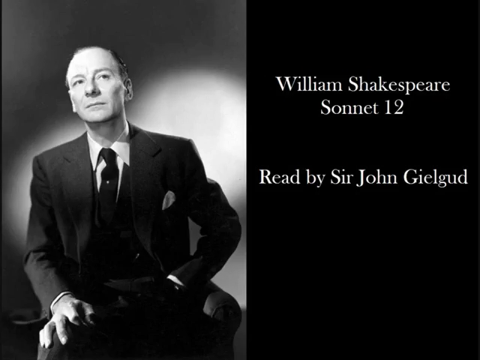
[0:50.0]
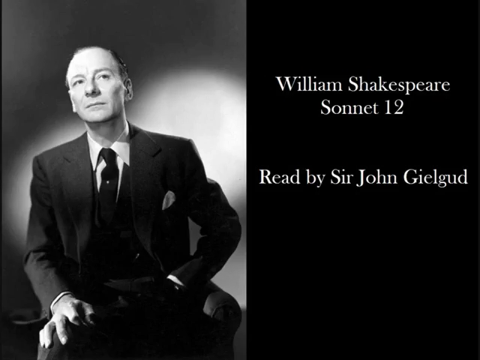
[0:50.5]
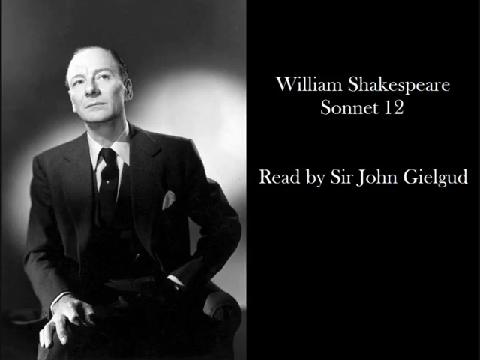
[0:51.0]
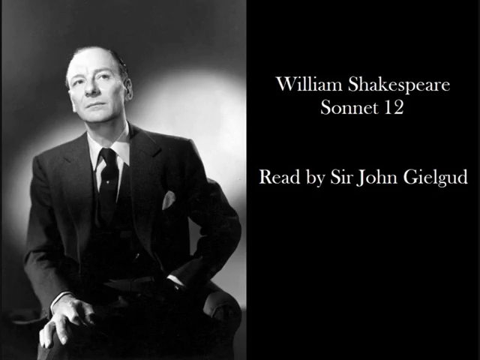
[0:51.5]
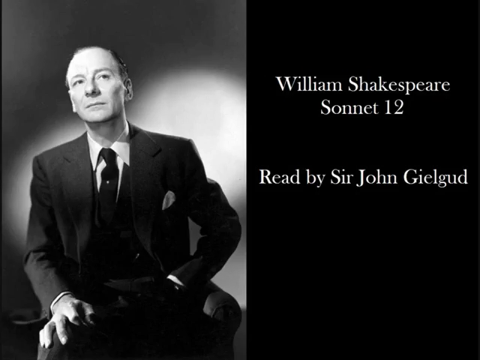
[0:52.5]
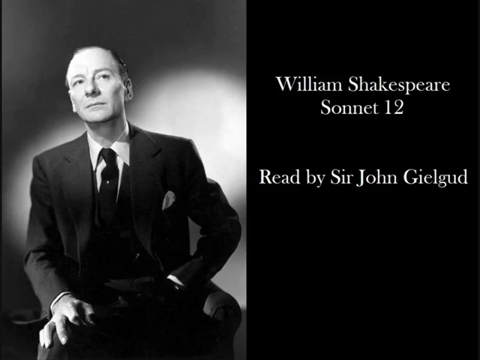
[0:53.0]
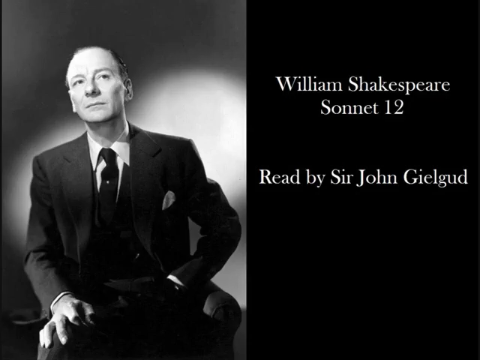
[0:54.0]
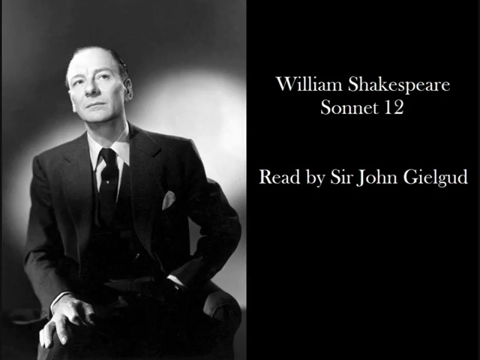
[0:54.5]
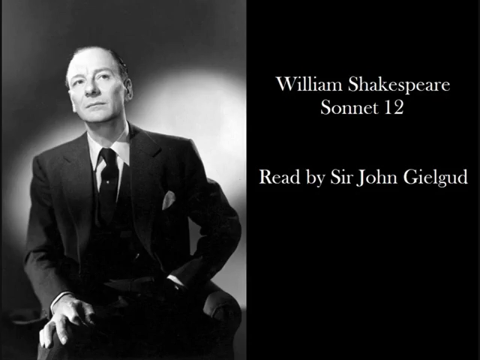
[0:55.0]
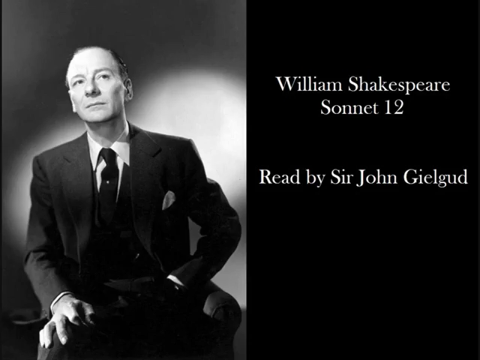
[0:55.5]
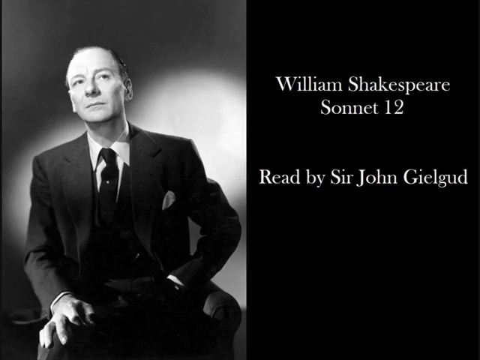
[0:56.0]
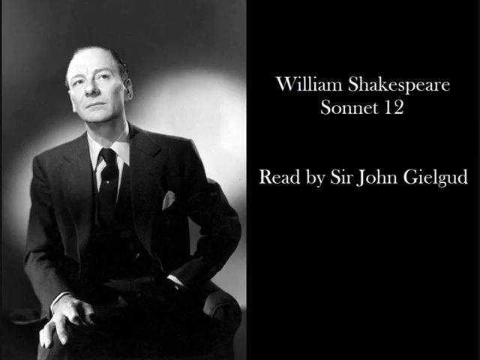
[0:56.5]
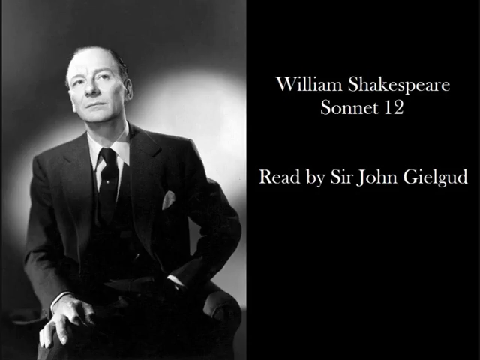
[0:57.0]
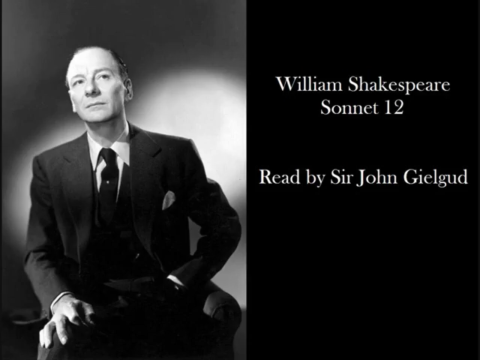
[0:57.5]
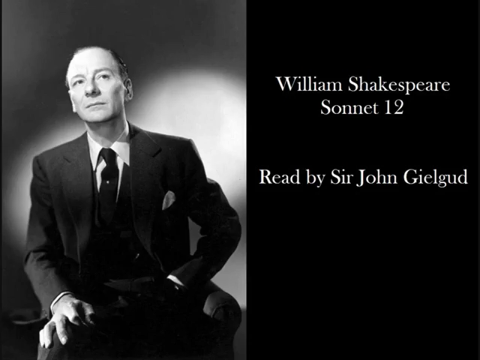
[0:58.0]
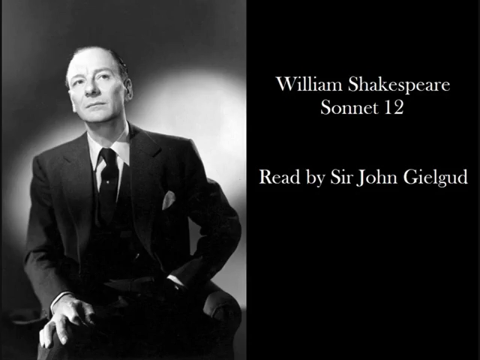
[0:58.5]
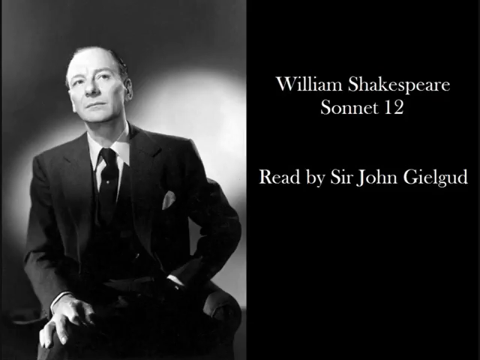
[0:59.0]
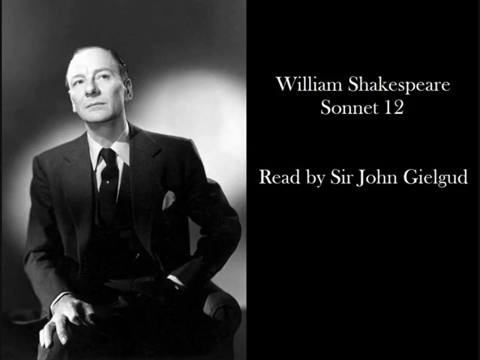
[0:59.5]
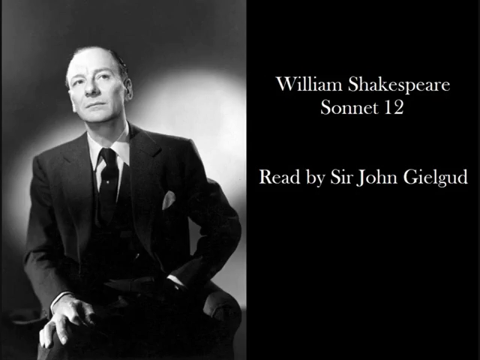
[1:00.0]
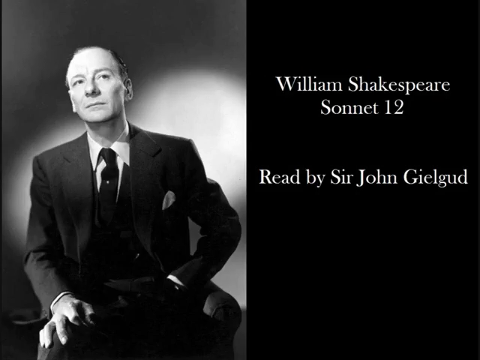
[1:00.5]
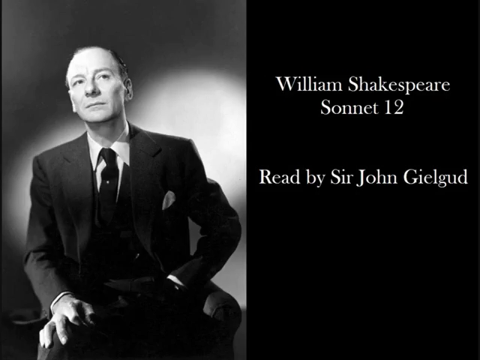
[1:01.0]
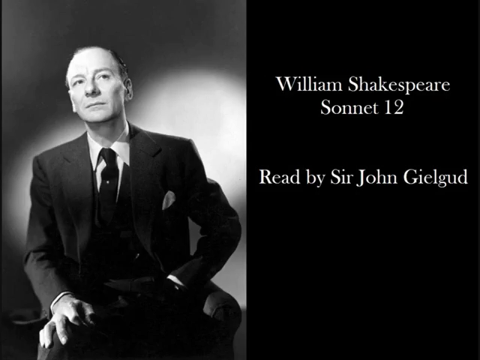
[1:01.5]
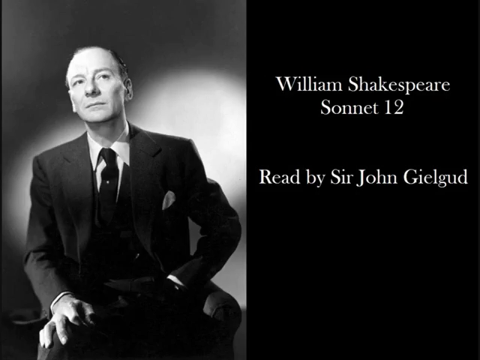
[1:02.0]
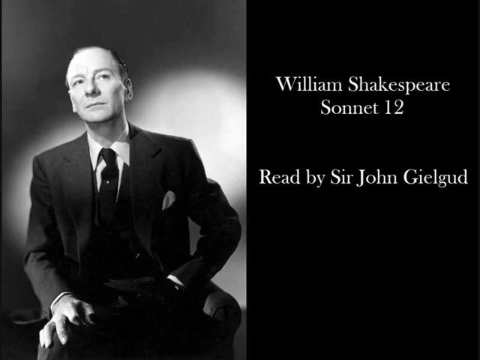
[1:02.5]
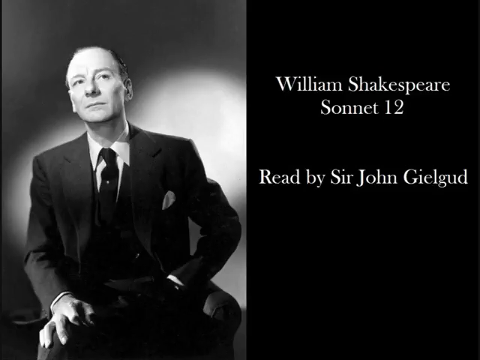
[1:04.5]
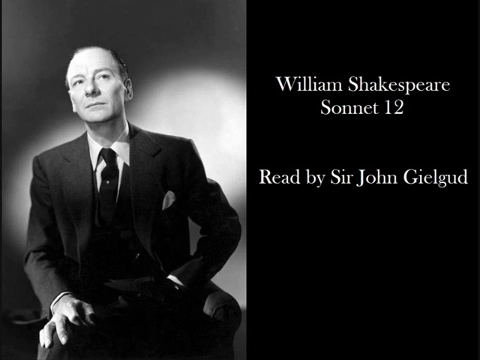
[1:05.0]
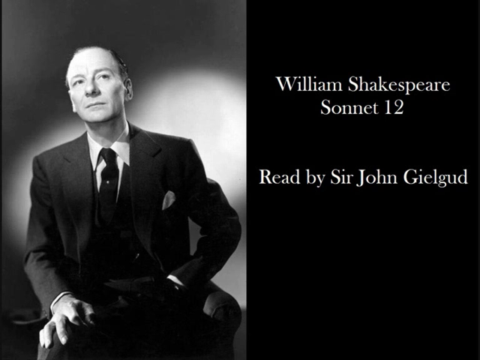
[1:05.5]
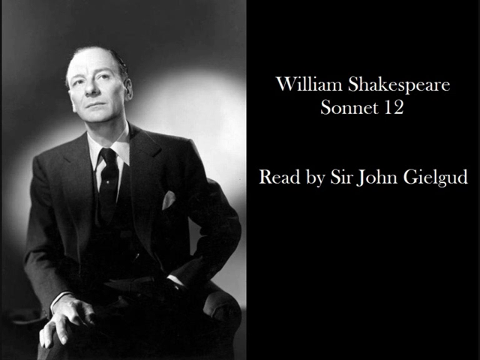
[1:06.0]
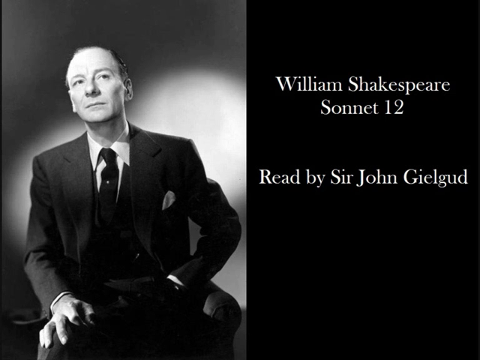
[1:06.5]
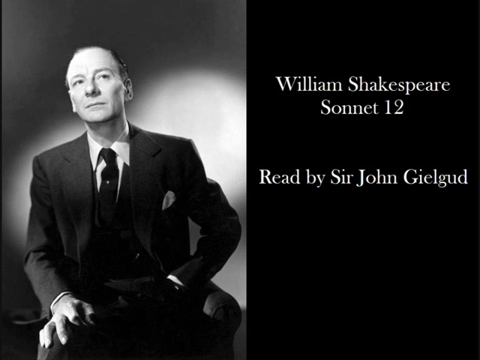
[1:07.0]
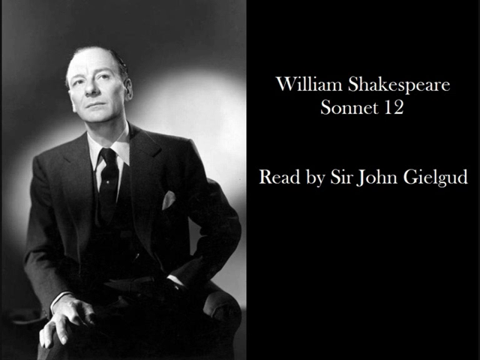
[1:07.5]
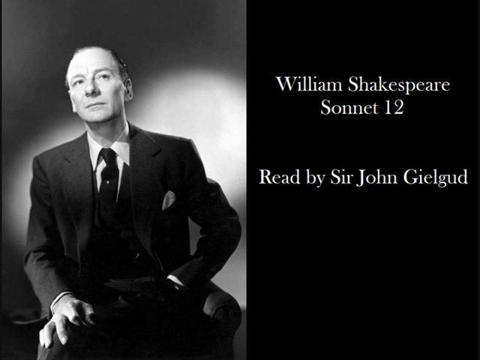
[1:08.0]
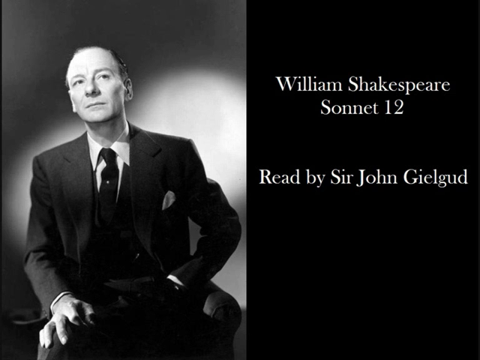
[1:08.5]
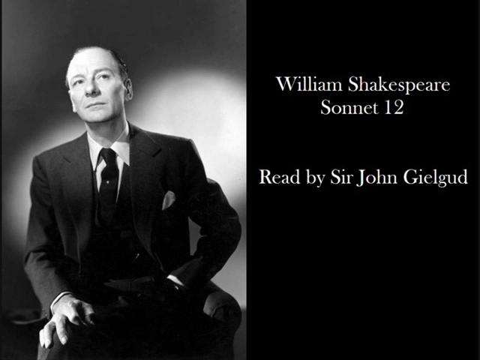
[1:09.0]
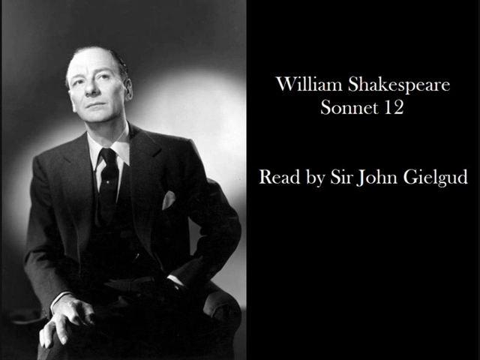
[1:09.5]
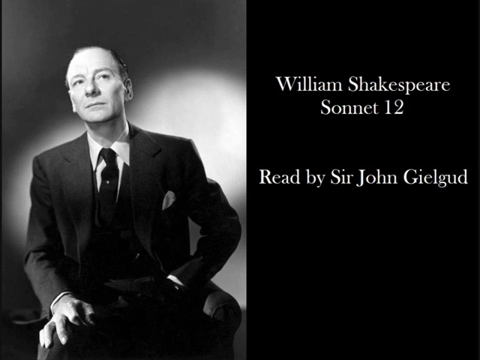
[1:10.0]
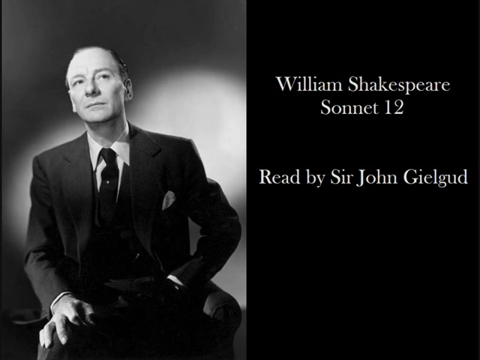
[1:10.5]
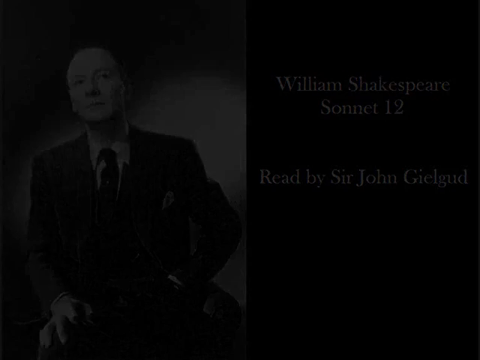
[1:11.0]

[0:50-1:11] The same two-part screen continues without motion or change. On the right is a black background with white subtitles reading "William Shakespeare's Sonnet 12, read by Sir John Gielgud". On the left is a black and white photo, apparently of Sir John: a middle-aged man in a suit, tie and tissue, with his left hand in his pocket and his right hand on his knee. He is staring upward. Two theatrical lights light him and the background behind him. He has short hair, looks very agile, and has a charismatic, aristocratic face; he looks distinct and intelligent. He is apparently about to read a radio drama or audiobook of William Shakespeare's Sonnet 12.